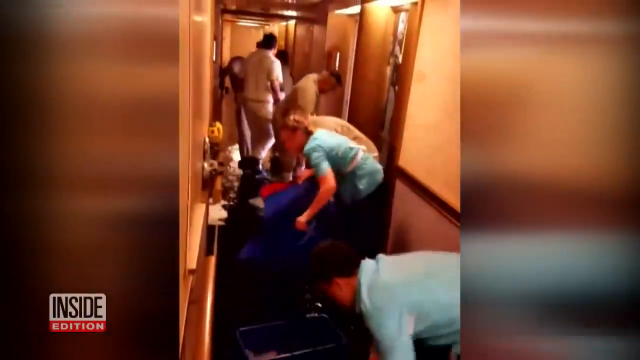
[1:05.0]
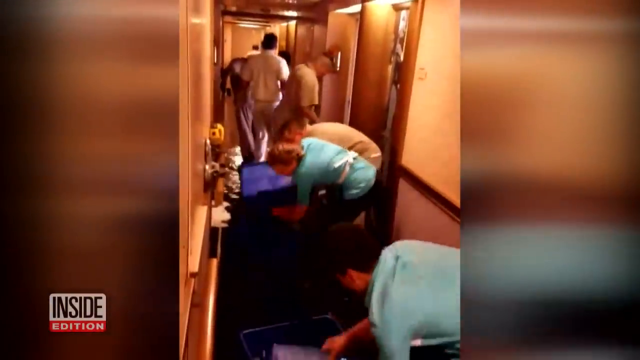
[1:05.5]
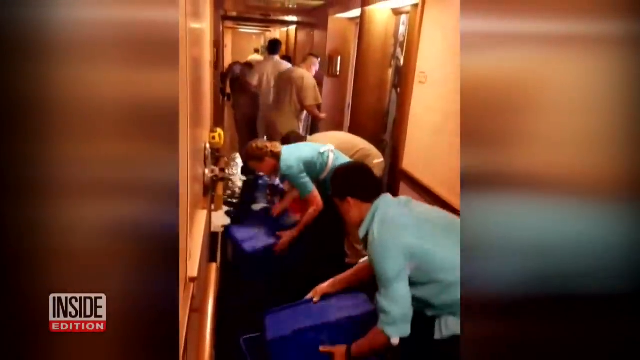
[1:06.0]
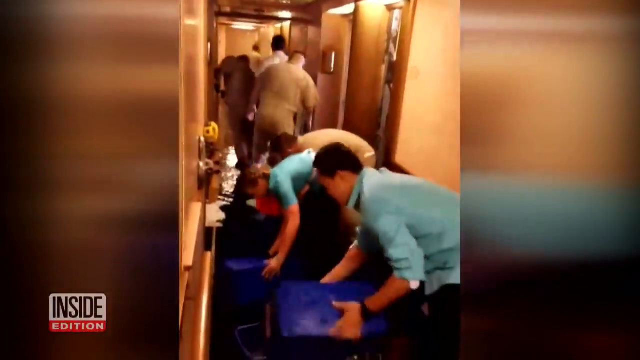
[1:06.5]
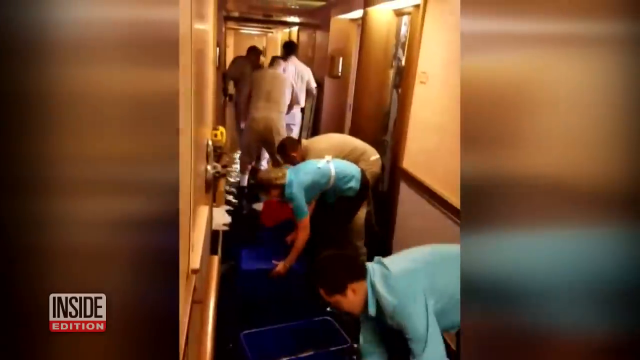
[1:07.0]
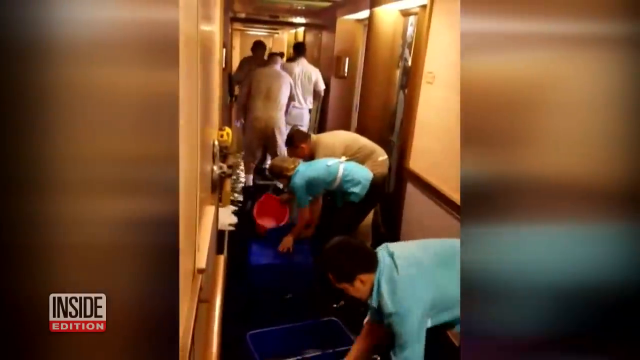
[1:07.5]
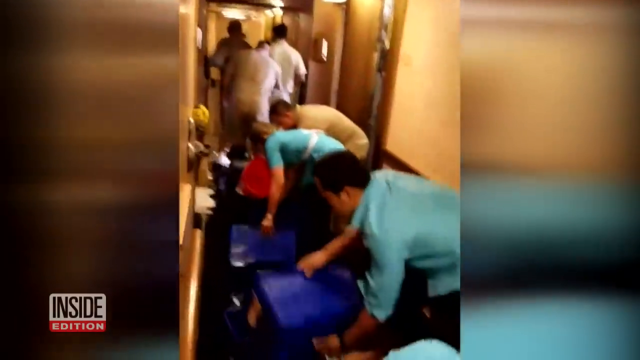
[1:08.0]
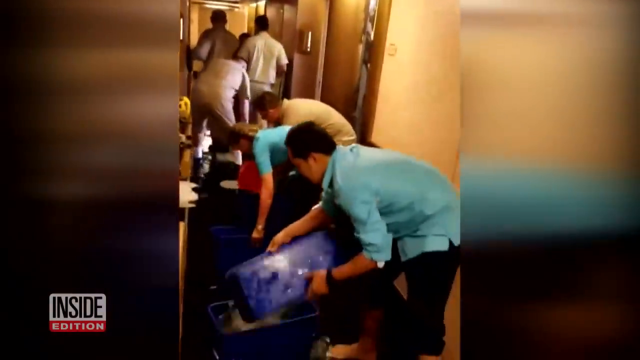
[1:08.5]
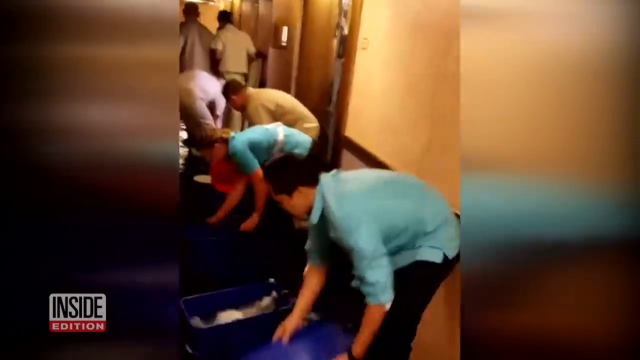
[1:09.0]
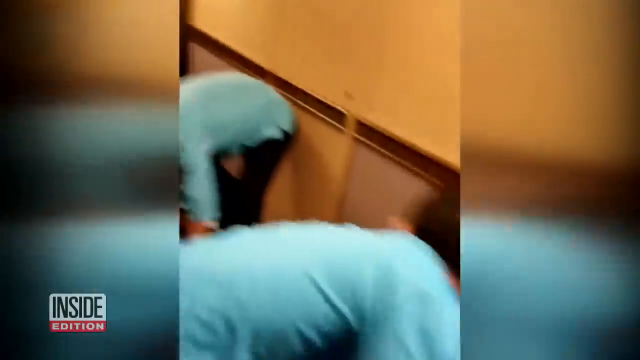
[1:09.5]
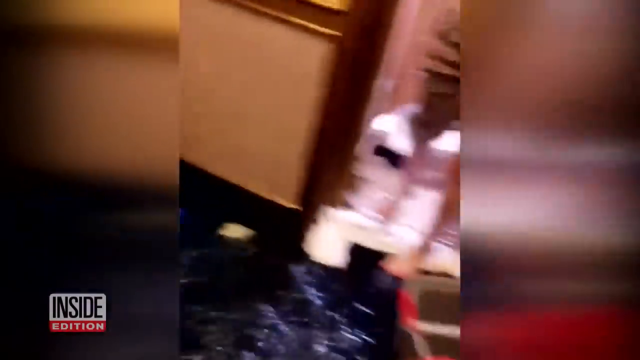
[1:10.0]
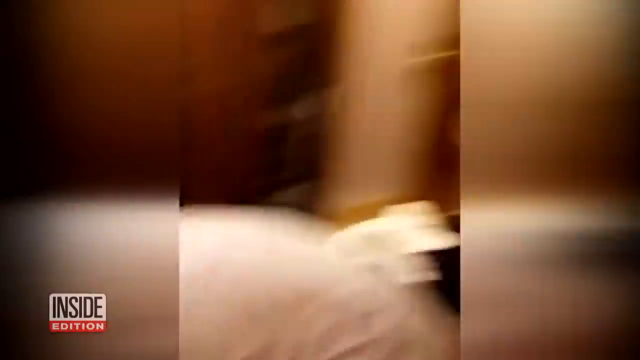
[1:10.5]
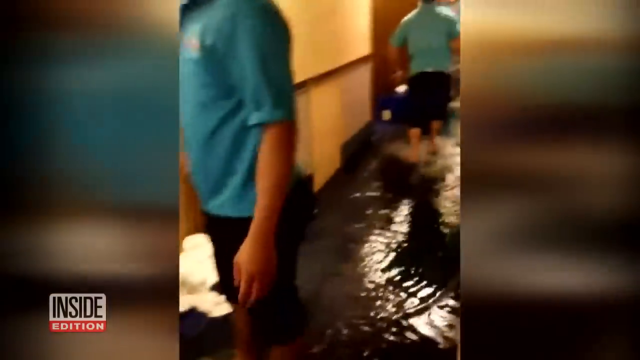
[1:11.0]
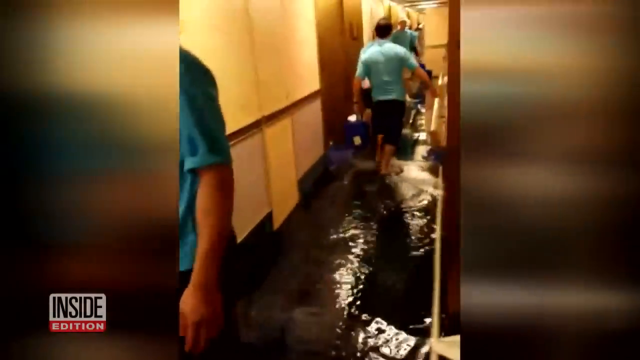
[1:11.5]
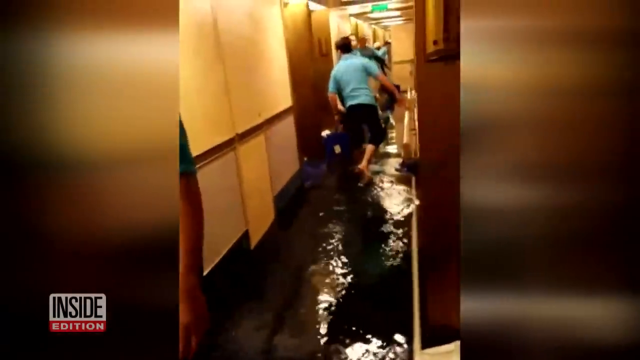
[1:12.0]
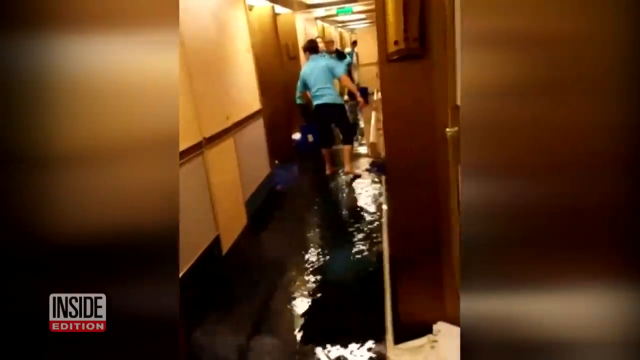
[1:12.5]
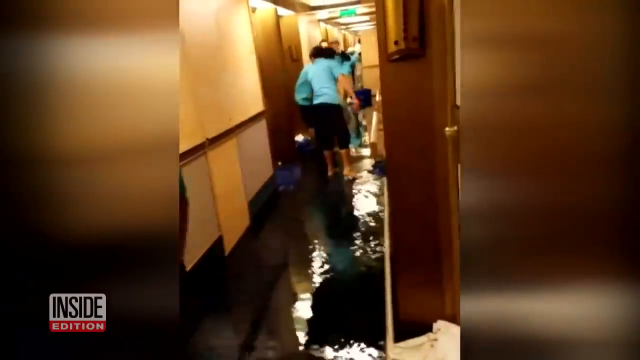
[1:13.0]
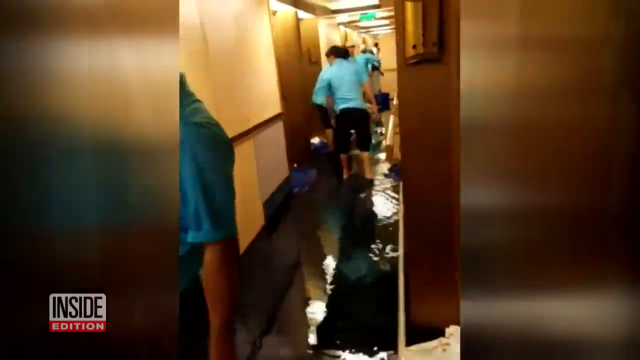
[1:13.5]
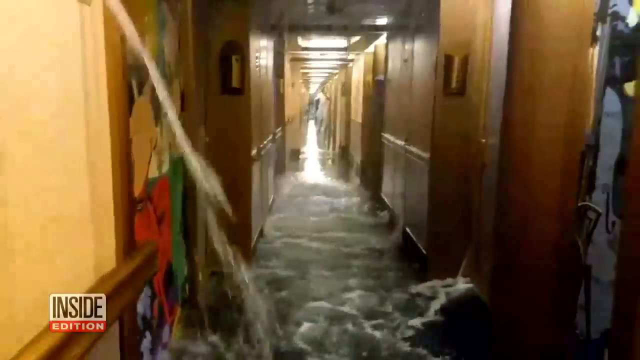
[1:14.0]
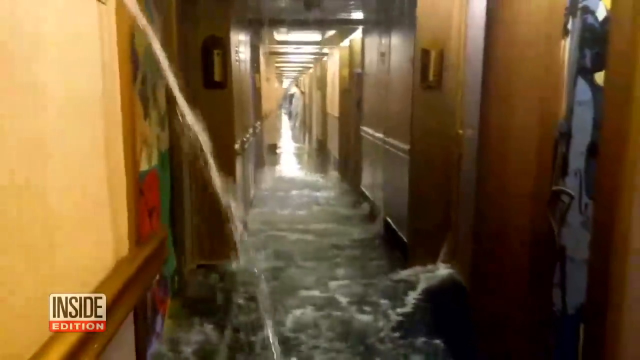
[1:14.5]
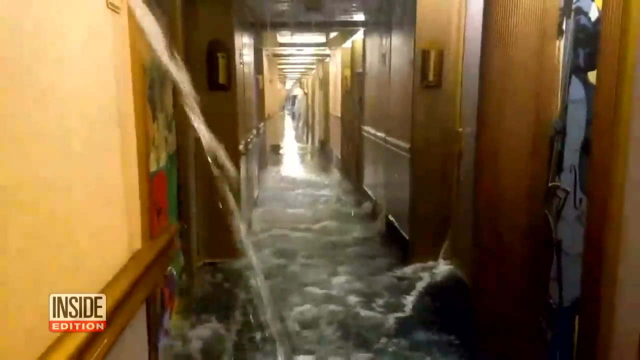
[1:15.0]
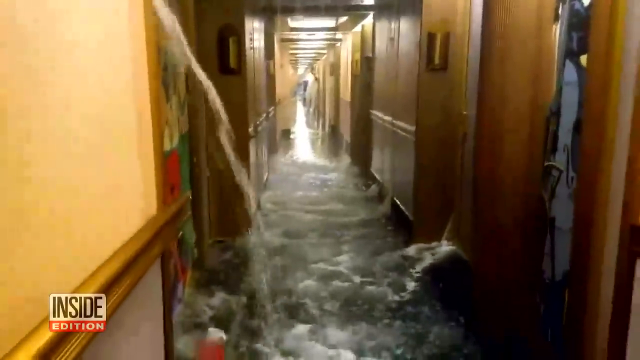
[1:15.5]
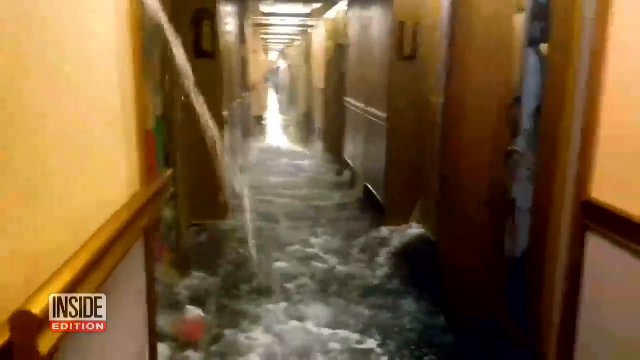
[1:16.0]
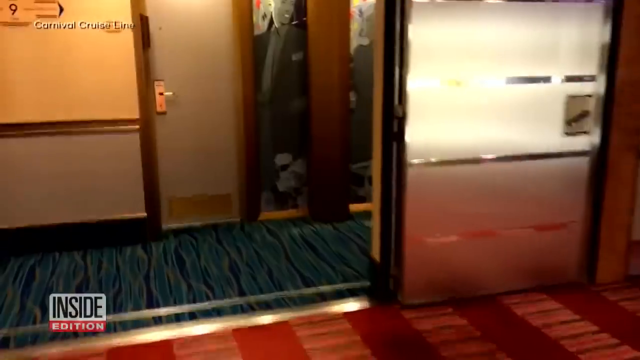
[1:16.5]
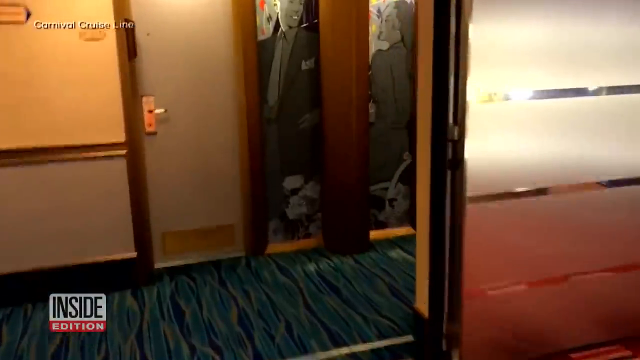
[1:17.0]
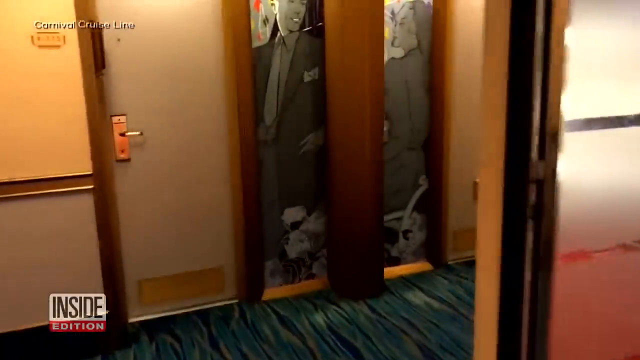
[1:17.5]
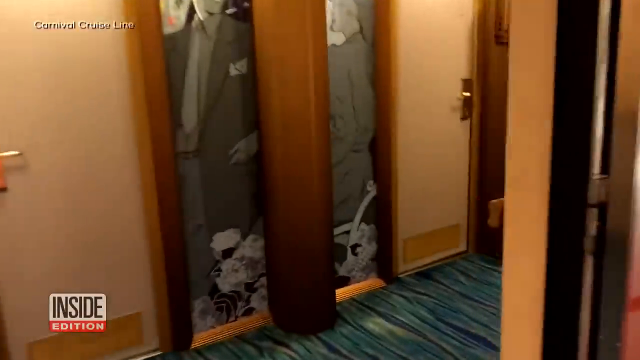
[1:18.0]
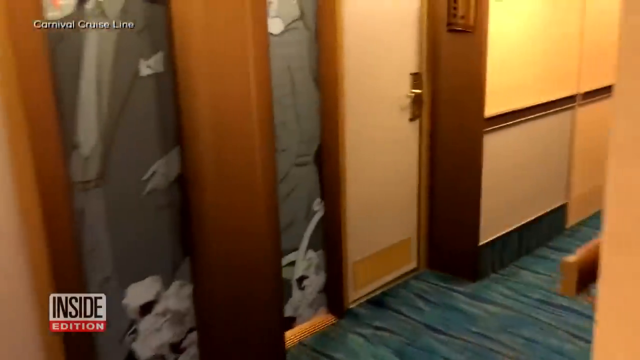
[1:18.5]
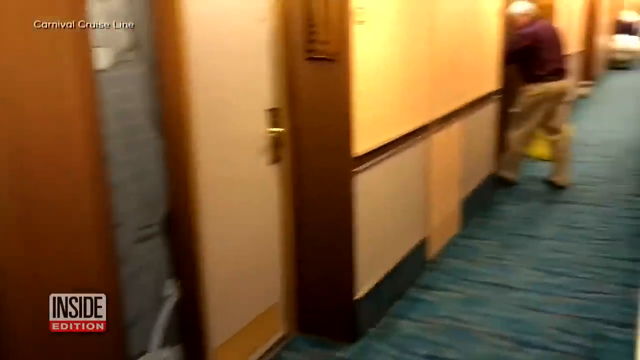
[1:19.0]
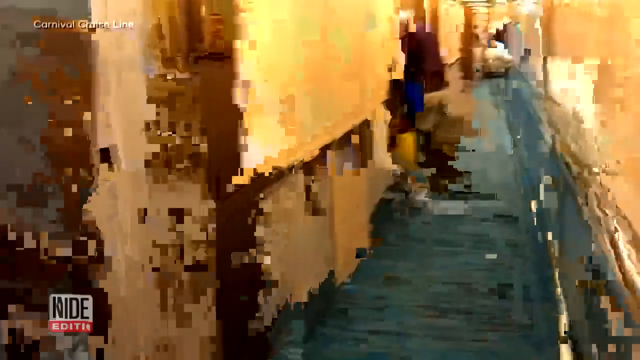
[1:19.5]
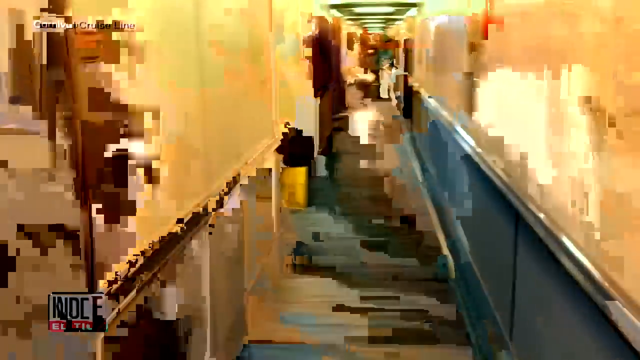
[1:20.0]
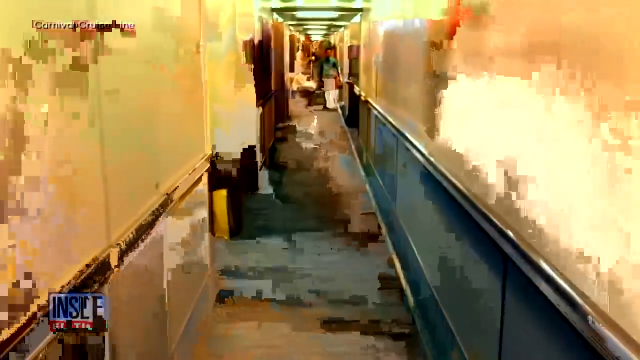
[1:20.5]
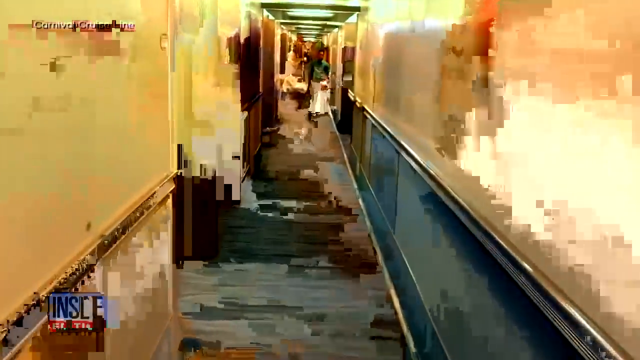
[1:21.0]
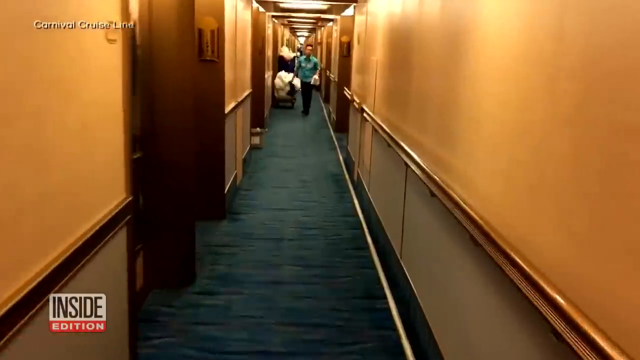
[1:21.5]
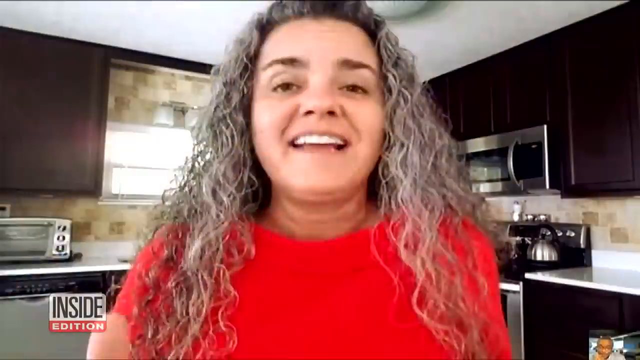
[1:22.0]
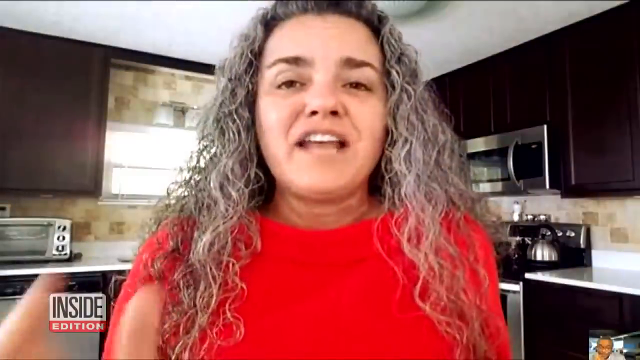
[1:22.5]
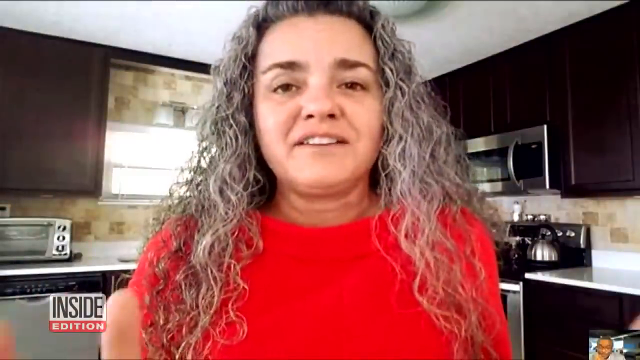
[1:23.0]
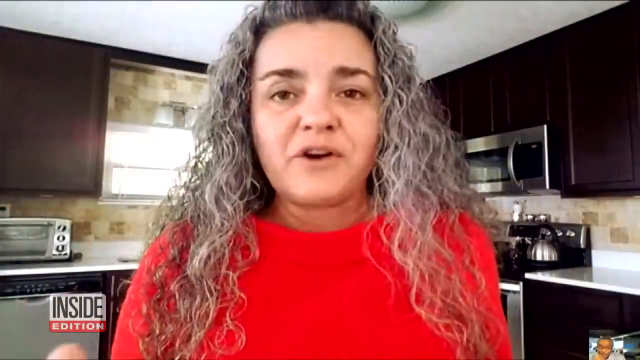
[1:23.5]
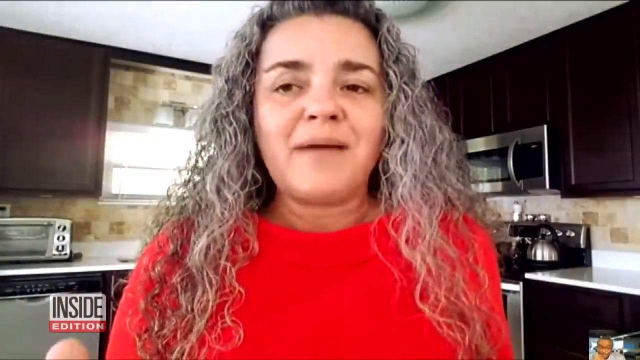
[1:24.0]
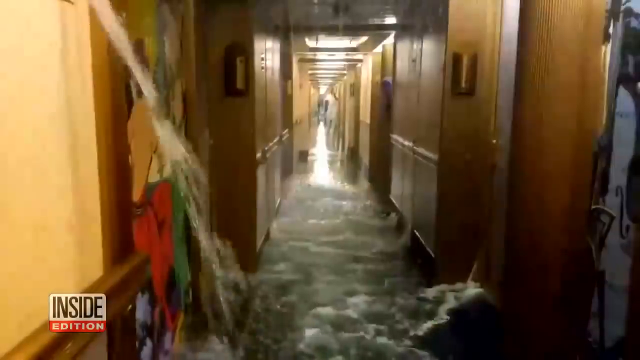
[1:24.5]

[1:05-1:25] Several men appear to be scooping the water into containers and going down the halls, exchanging buckets to clear the water from the halls. Several of the men wear baby blue long t-shirts and use blue containers. Several of the individuals are not wearing any shoes or socks, and their feet are visible. The aftermath follows: the hallways appear to be dry now, no longer covered in water, and several rooms appear to have their doors open. Some of the damage is shown, along with several individuals walking the hall who appear to be checking their rooms. The lights are still on. The view pans back to the woman giving the interview, who wears a red blouse and has whitish grey hair, talking inside her kitchen.